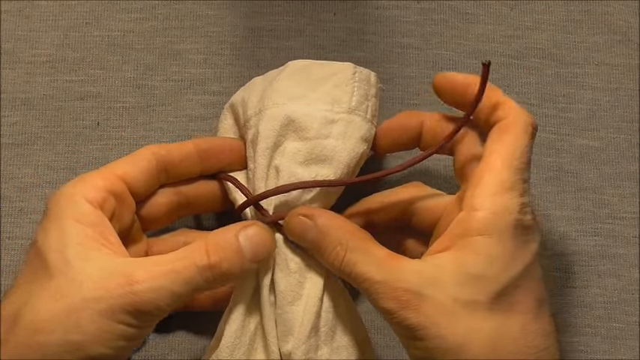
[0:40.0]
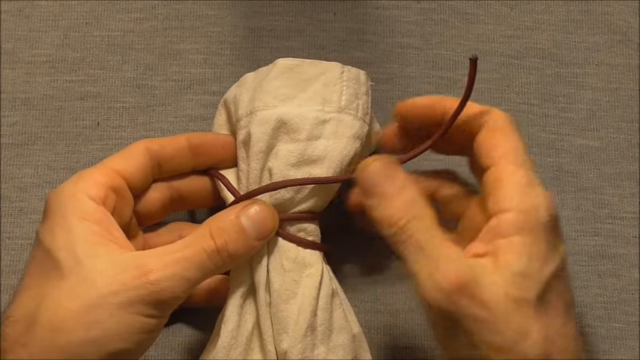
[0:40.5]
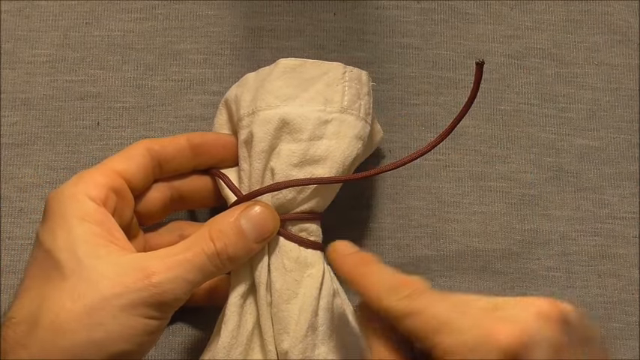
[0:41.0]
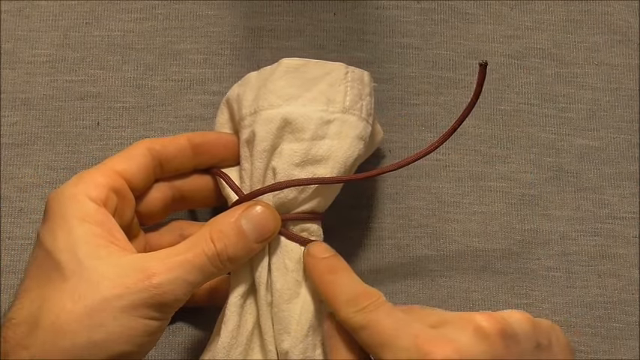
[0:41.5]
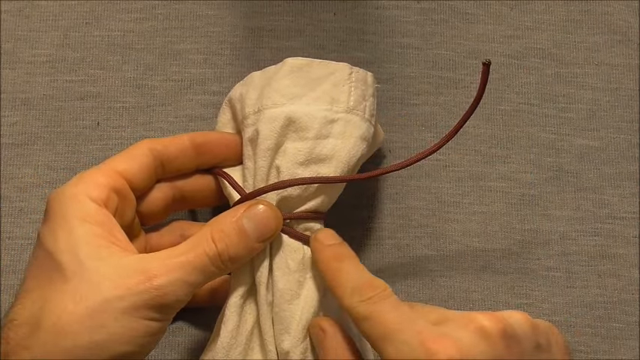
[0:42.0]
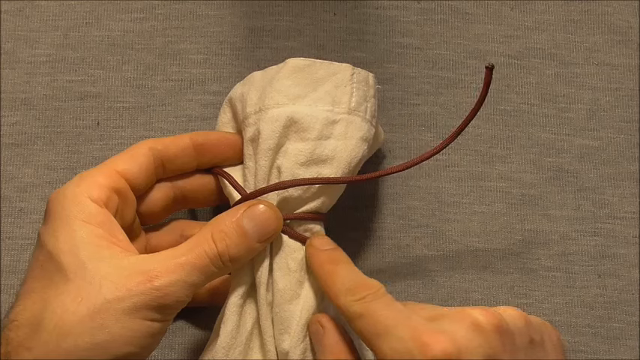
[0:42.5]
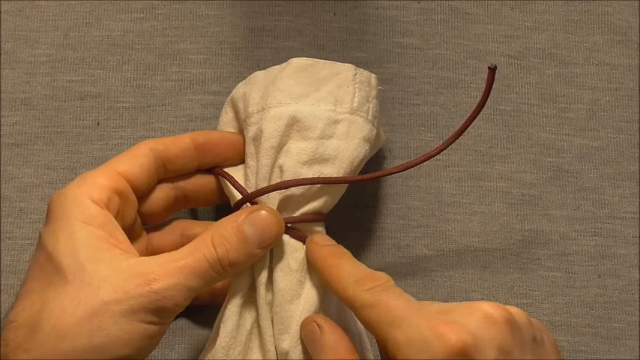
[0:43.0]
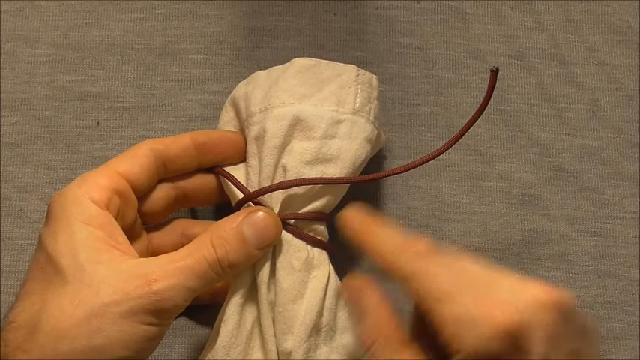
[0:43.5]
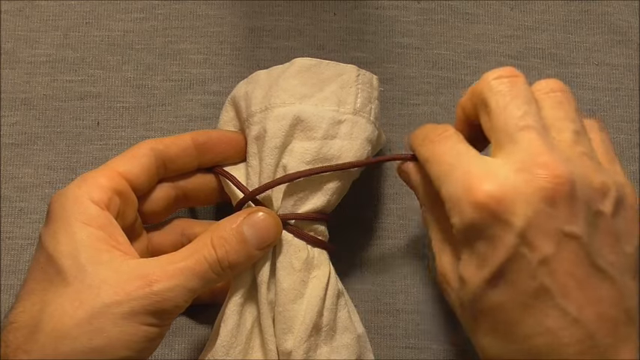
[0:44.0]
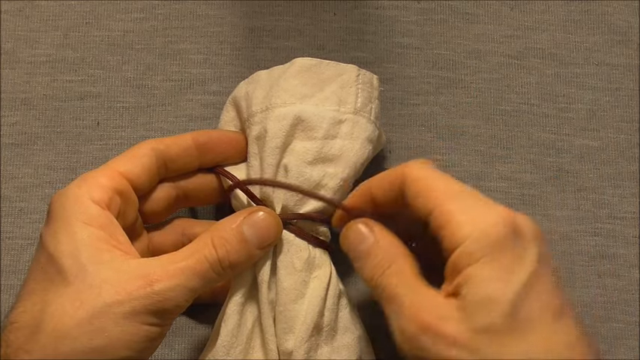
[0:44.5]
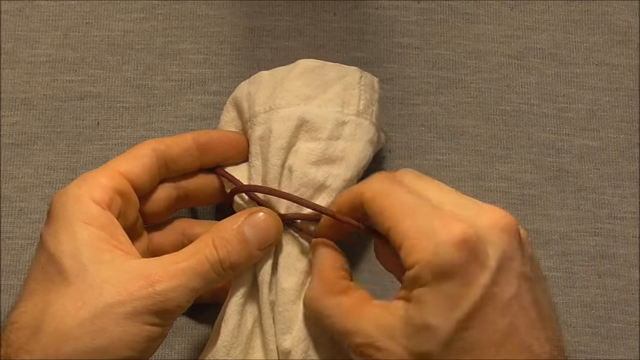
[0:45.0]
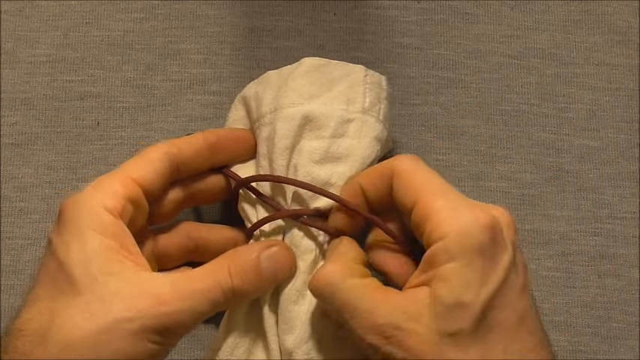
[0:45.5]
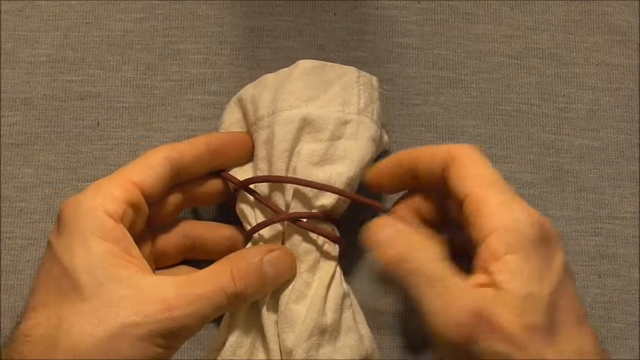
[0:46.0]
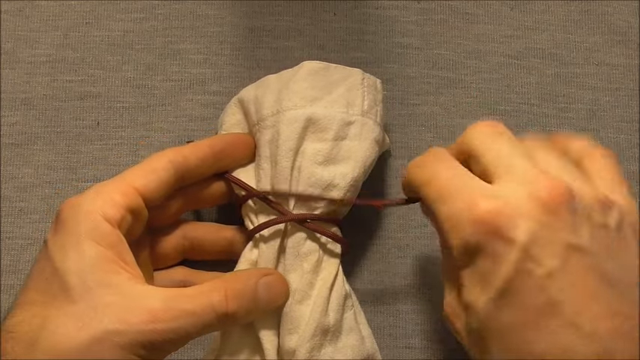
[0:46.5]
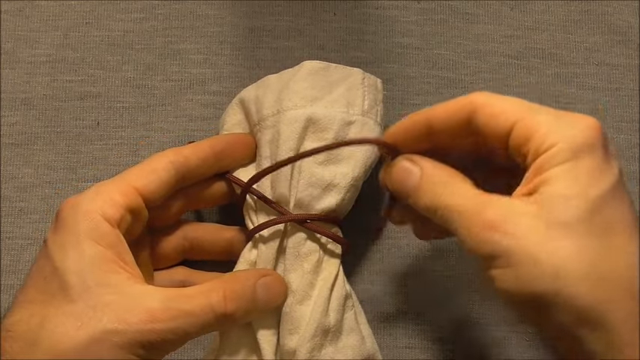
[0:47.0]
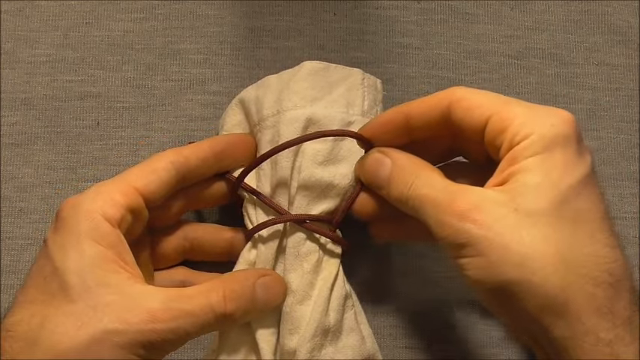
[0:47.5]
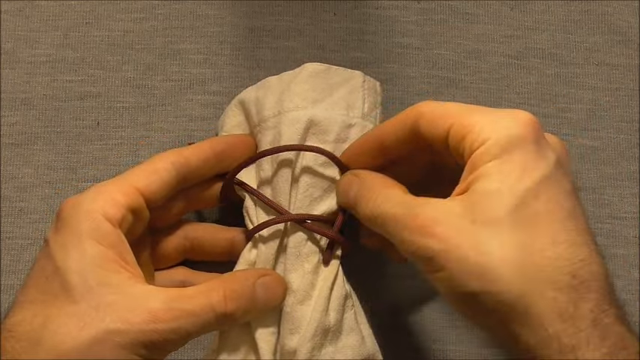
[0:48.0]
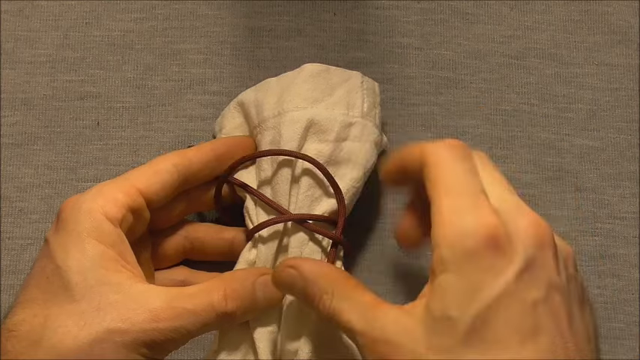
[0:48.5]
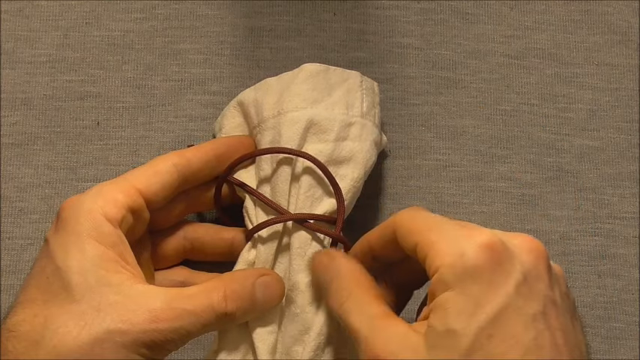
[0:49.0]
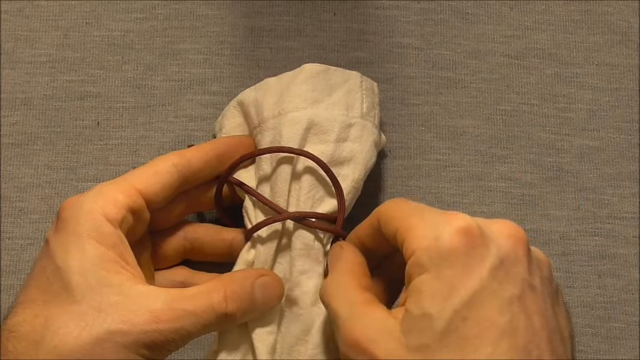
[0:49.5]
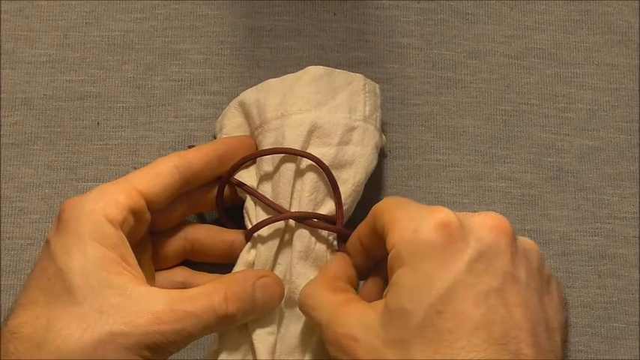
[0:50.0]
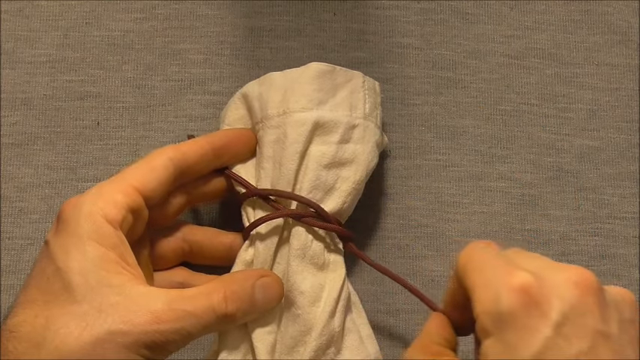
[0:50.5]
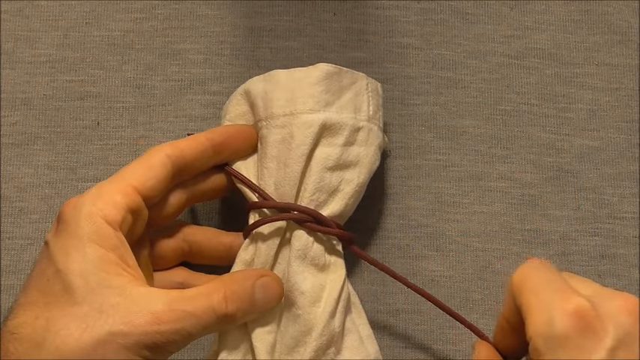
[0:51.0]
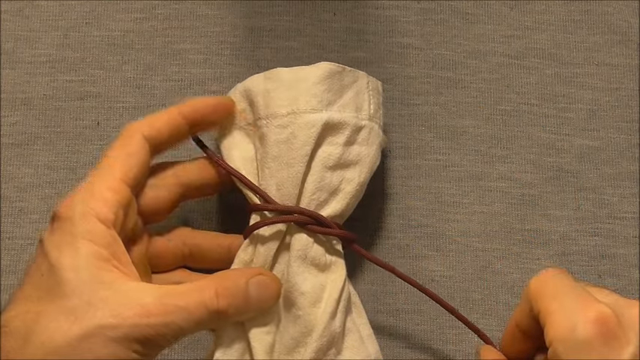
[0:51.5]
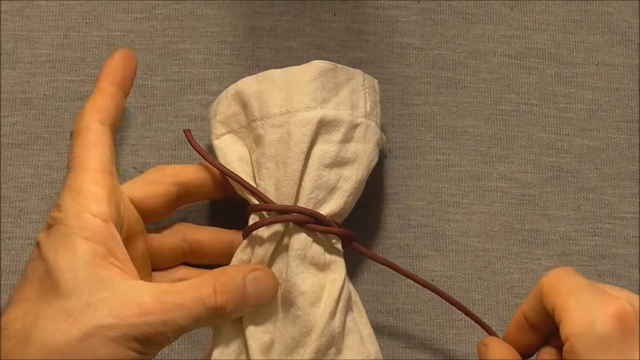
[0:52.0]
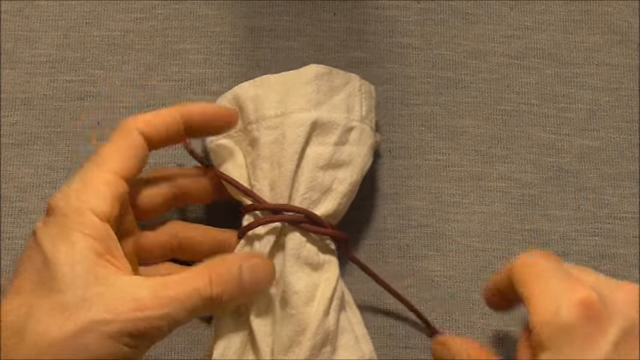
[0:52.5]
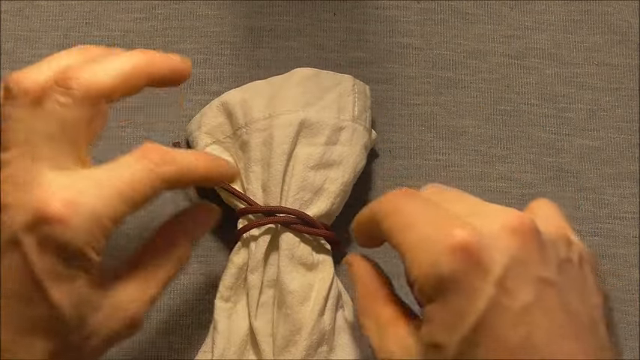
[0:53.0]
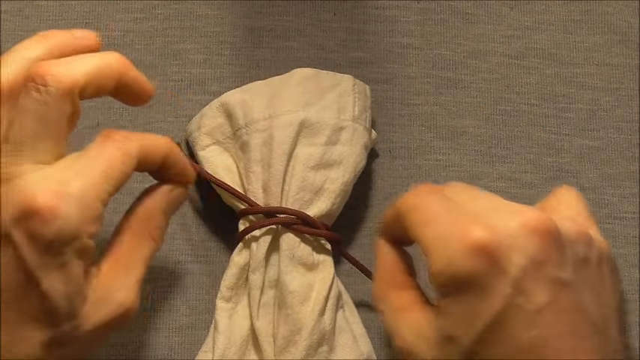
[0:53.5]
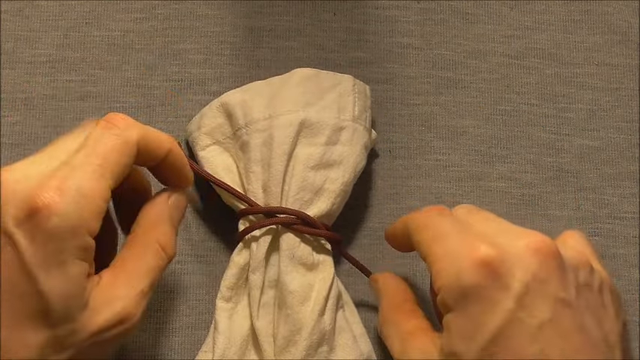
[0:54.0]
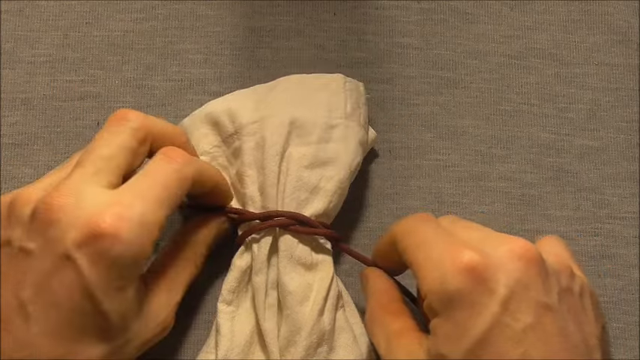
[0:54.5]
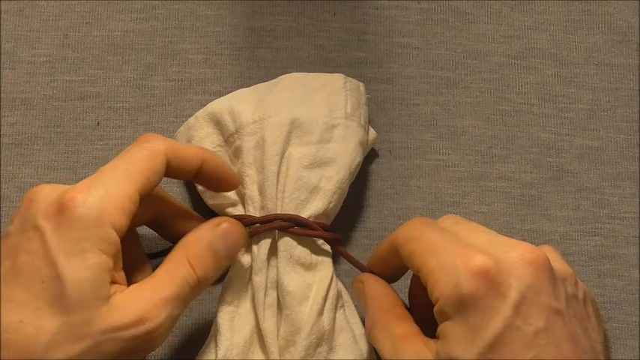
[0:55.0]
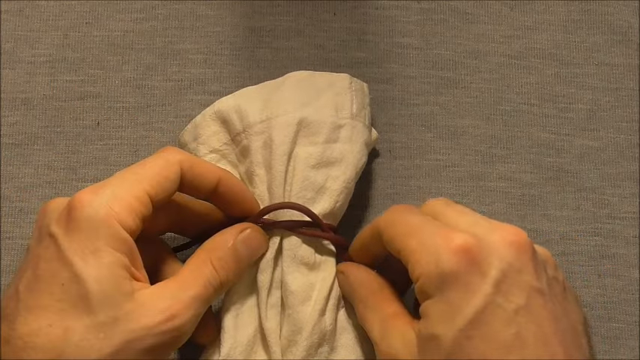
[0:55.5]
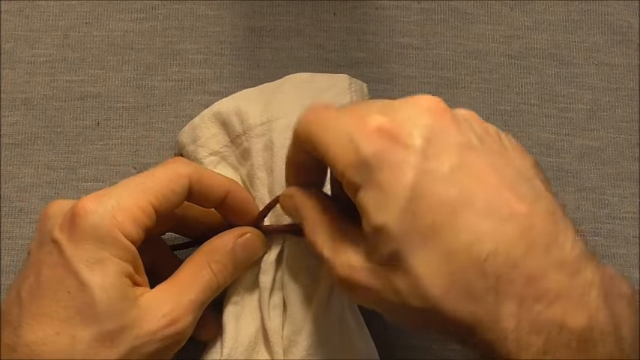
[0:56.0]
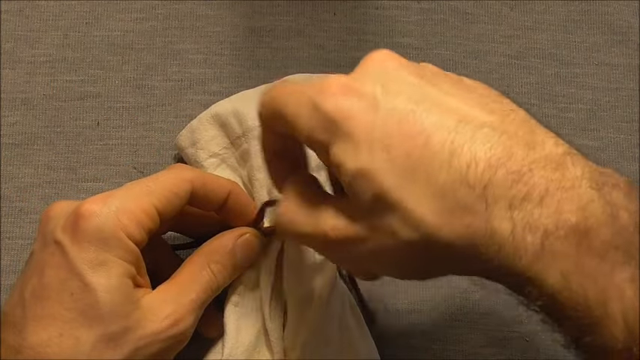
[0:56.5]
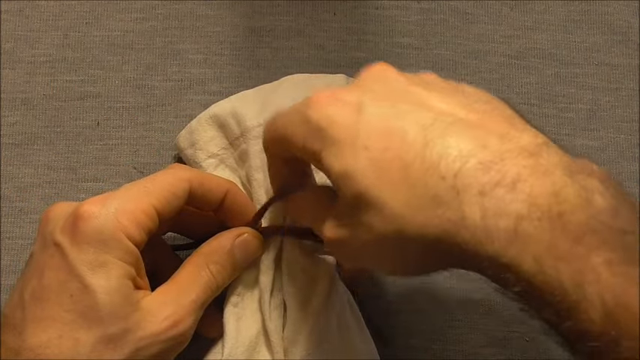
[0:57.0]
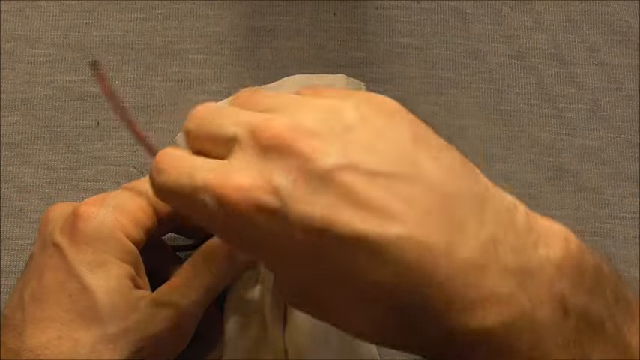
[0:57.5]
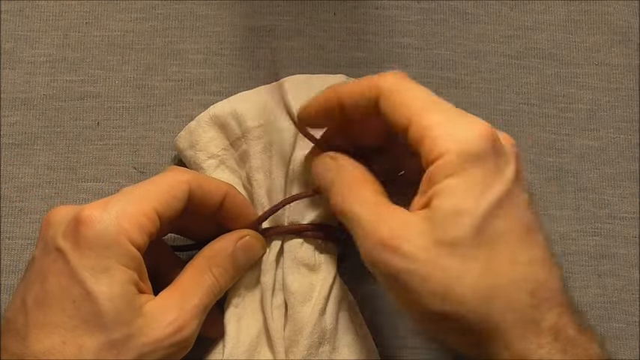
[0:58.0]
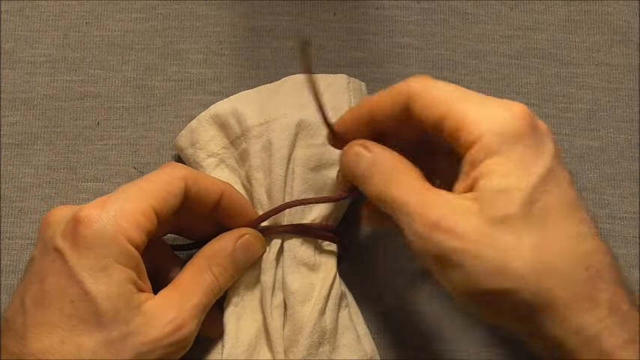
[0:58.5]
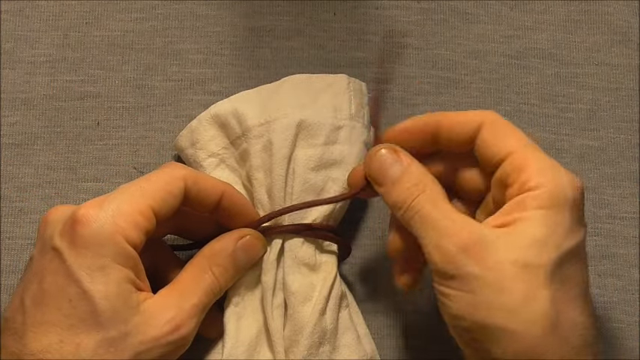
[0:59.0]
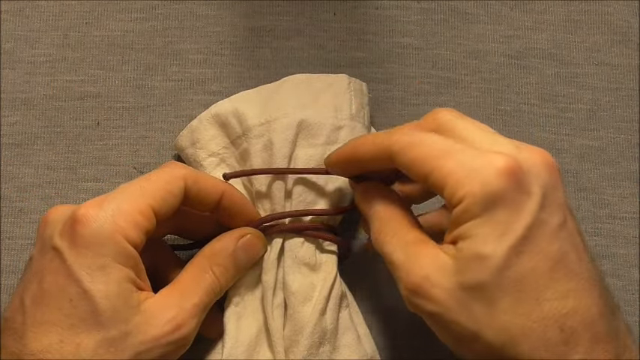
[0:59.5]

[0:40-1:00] Two hands of the same person, apparently male and light-skinned, hold a piece of beige cloth with a string around it, forming almost a knot, against a dark gray background. The right hand and right index finger show what to do with the string. There is a little space in the knot, and one end of the string is put between the two parts of the string and pulled in, forming a knot. He fastens the string so the knot holds together well, then takes the other end of the string and puts it around the cloth and the knot being made.